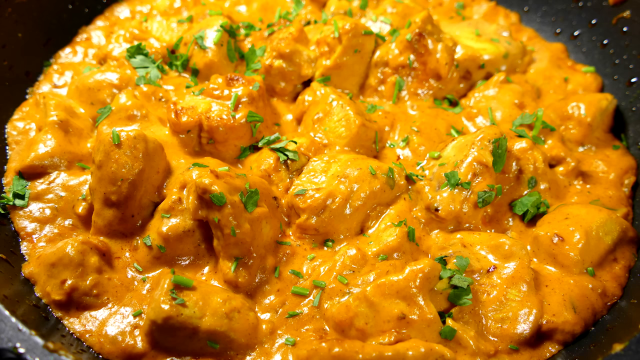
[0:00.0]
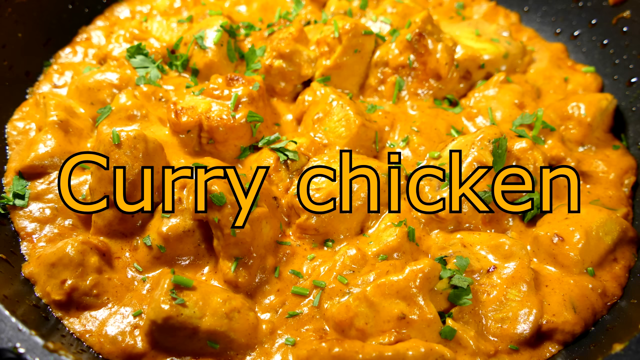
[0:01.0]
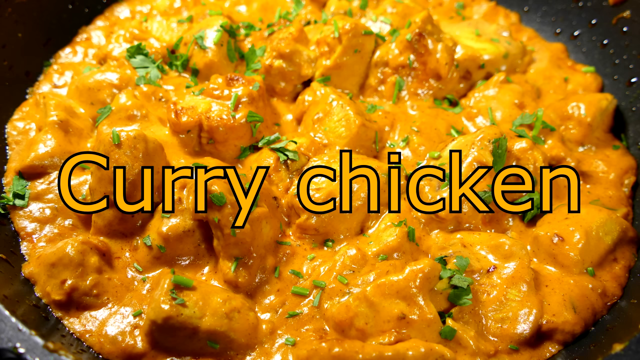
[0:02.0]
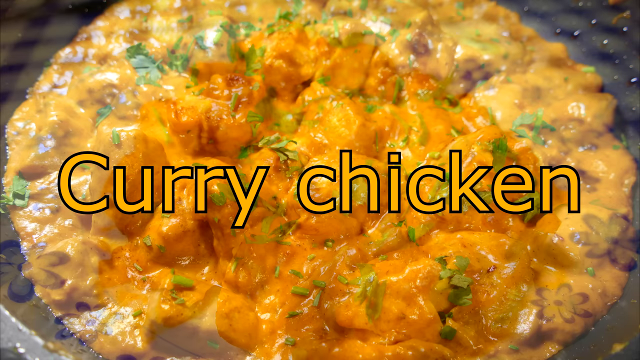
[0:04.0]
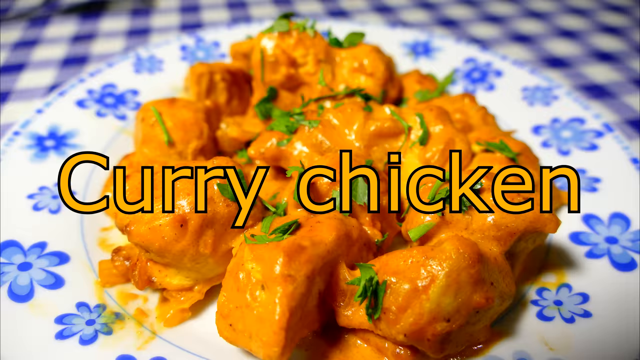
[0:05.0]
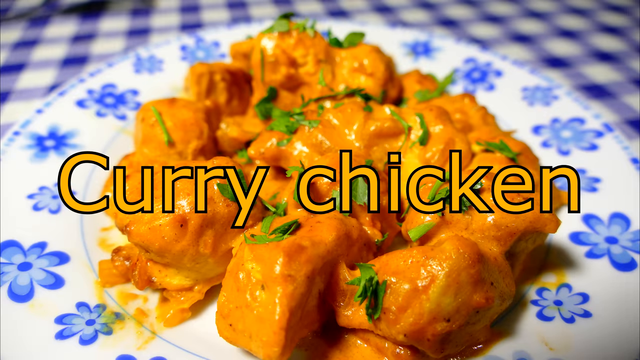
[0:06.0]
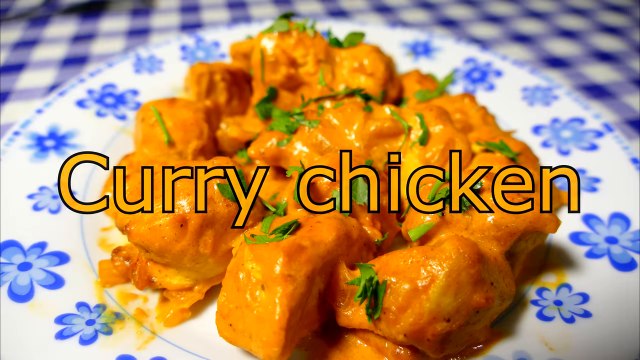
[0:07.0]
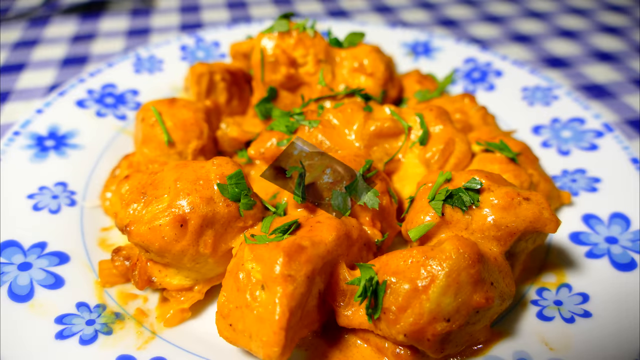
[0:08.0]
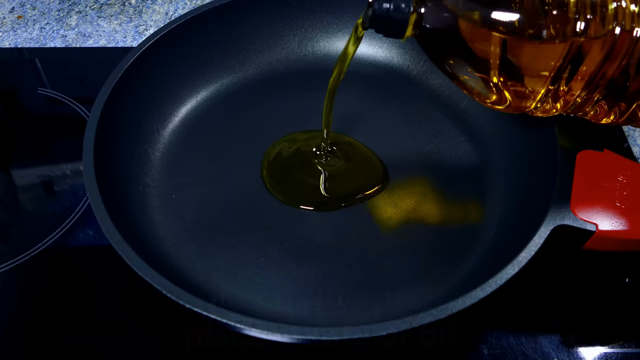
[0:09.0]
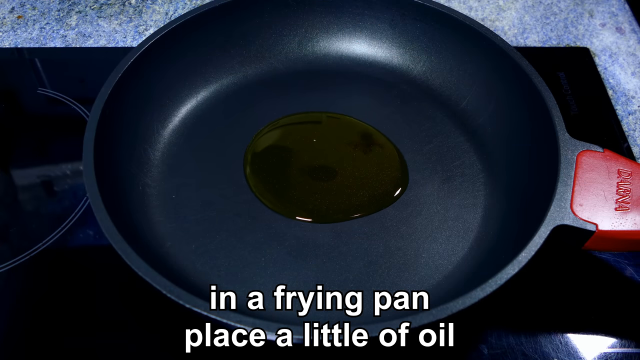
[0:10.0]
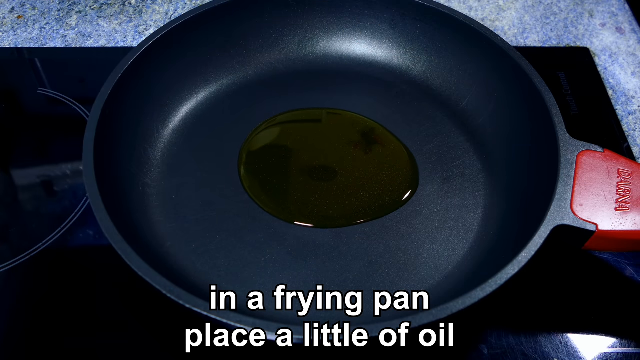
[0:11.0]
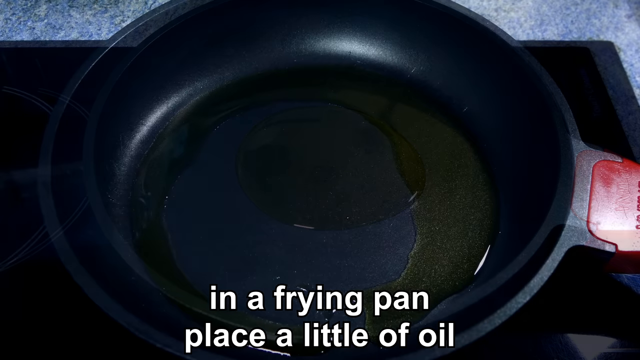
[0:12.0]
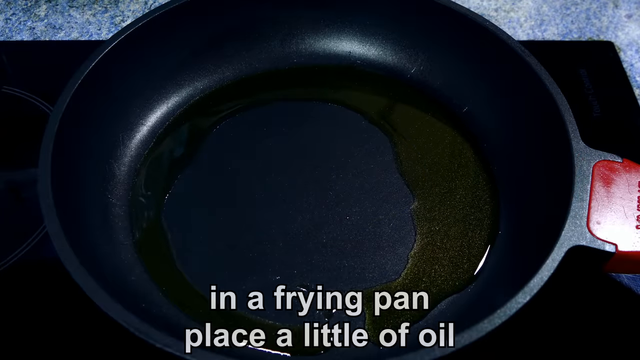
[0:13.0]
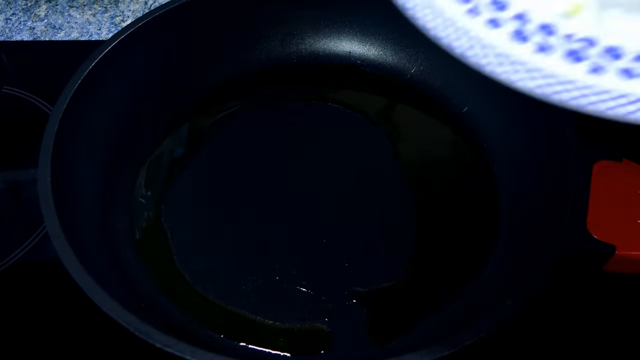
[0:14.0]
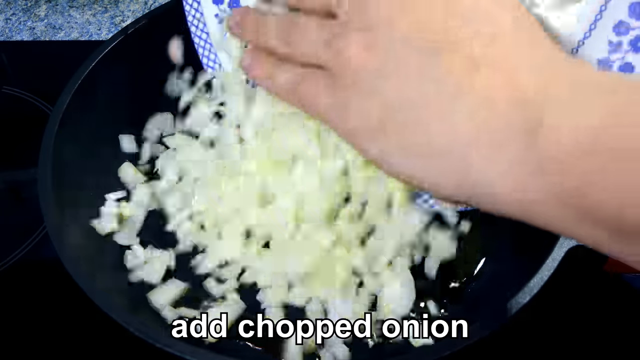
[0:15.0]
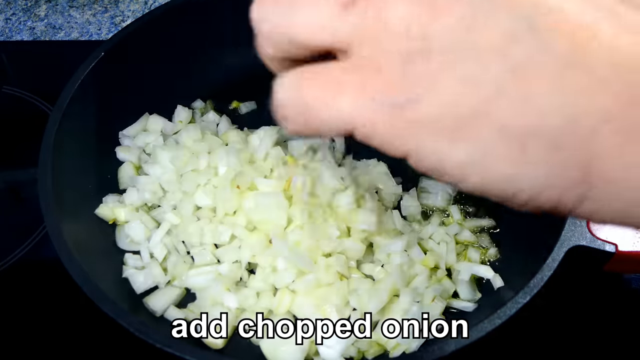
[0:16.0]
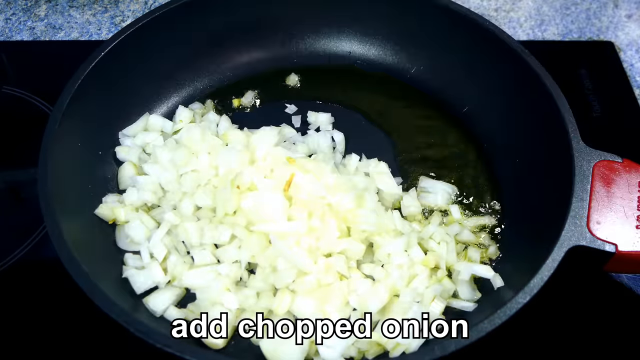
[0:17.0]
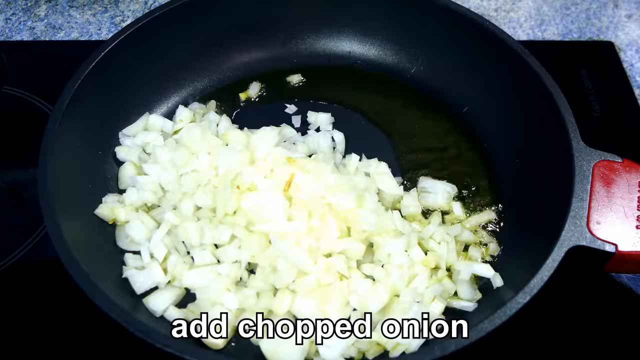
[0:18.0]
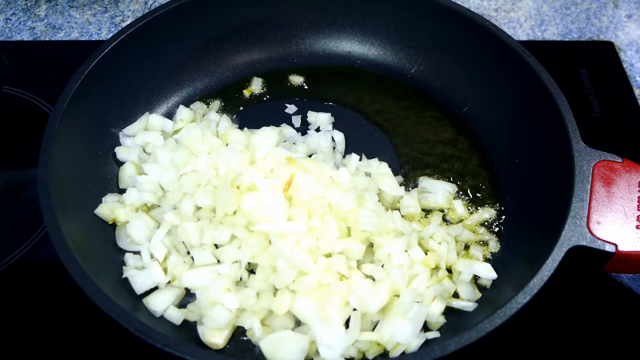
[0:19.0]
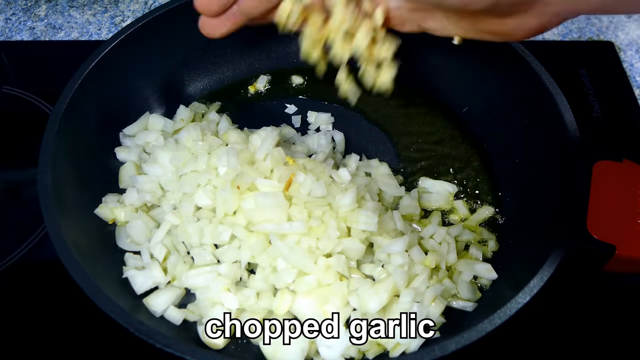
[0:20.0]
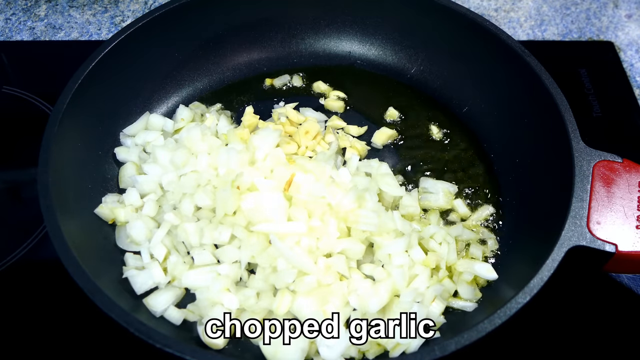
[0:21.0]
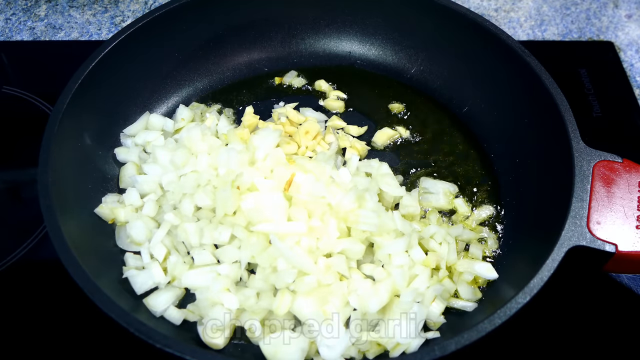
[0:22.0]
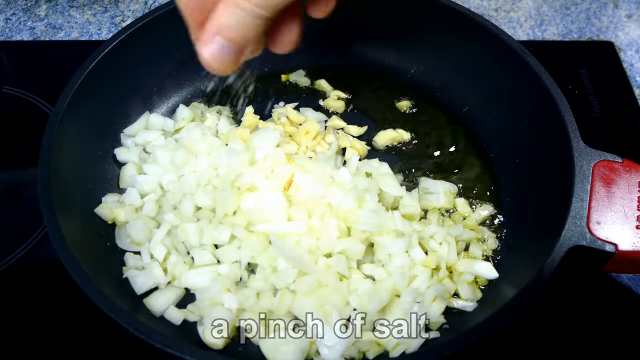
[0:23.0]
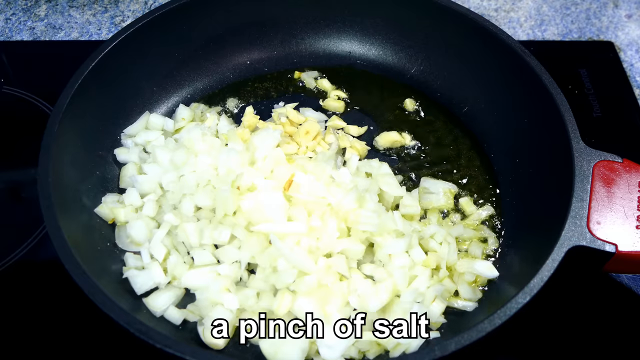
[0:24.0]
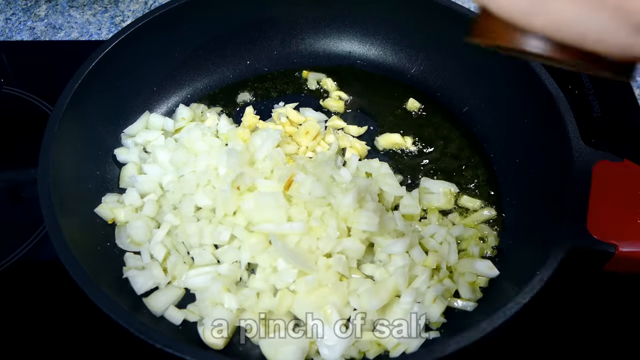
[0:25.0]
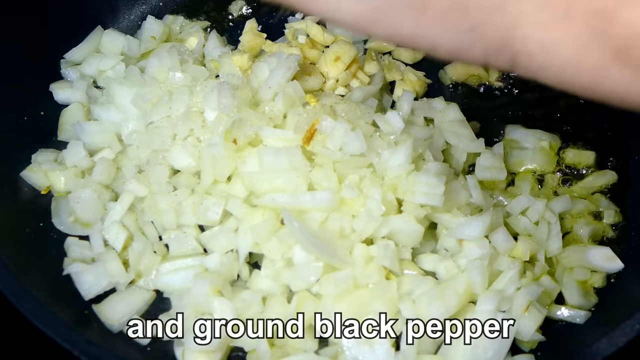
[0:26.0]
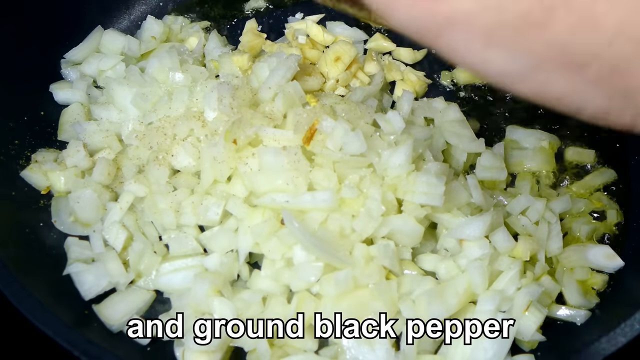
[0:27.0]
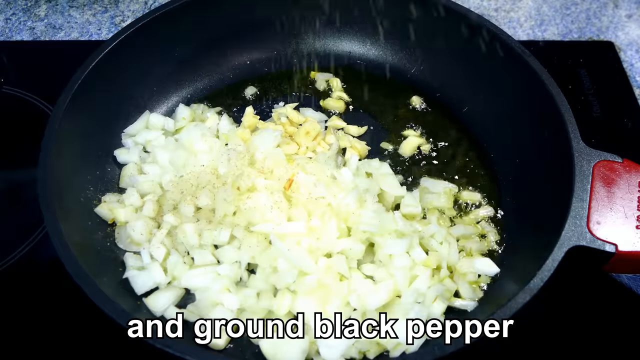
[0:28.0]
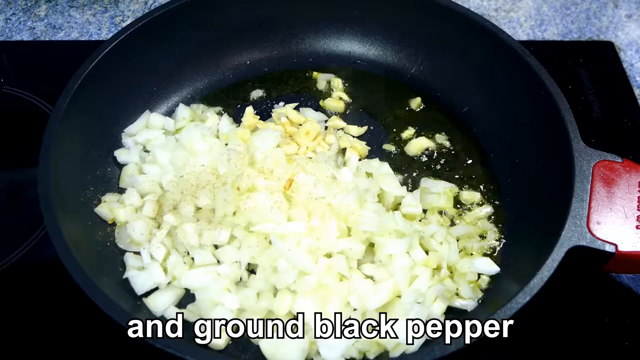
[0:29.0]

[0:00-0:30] A text overlay reads "curry chicken." Behind the text there is first a bowl of curry chicken and then a plate of curry chicken, showing two different ways it could be served. Some oil is put into a frying pan, and then a bunch of chopped onions are added to the oil; the onions immediately begin to fry. Chopped garlic is added and begins to fry as well, followed by a pinch of salt and ground black pepper. A wooden spatula is then used to stir the ingredients around the bottom of the pan so they sauté evenly.